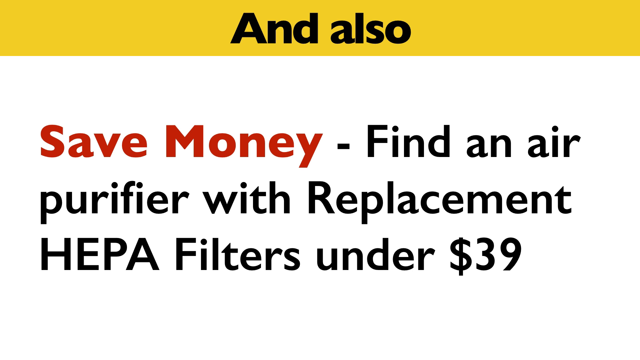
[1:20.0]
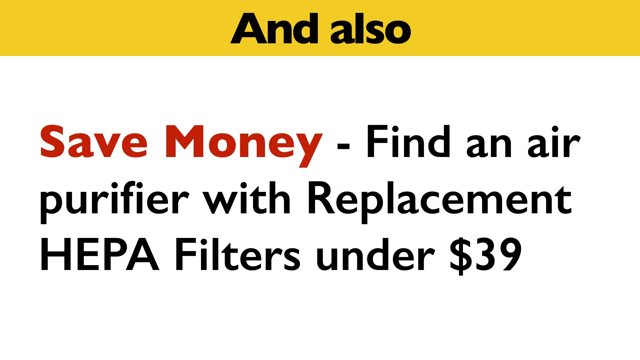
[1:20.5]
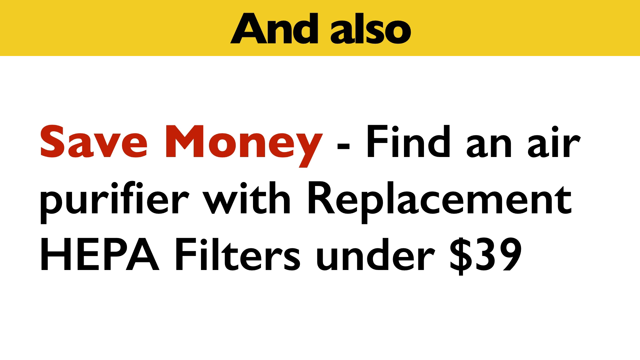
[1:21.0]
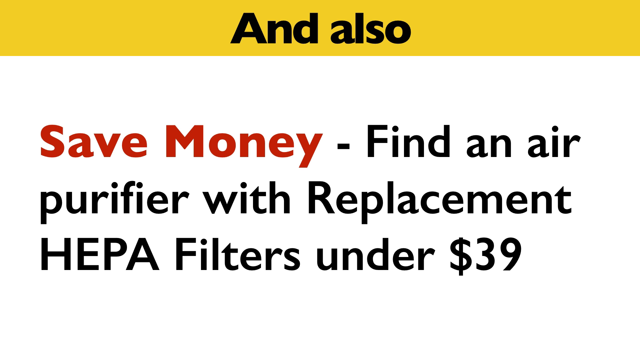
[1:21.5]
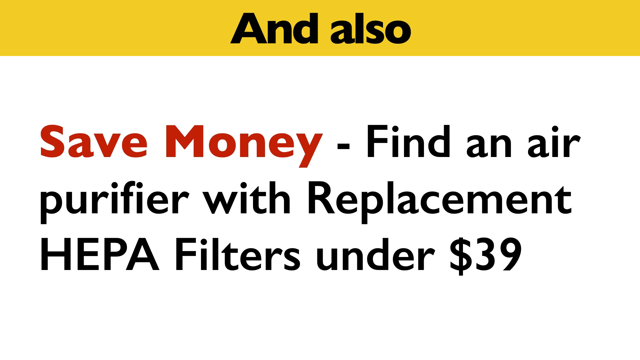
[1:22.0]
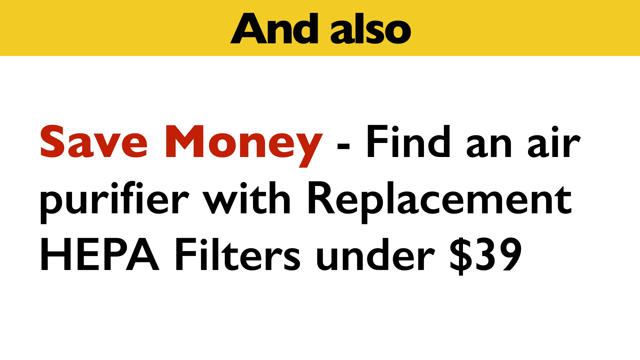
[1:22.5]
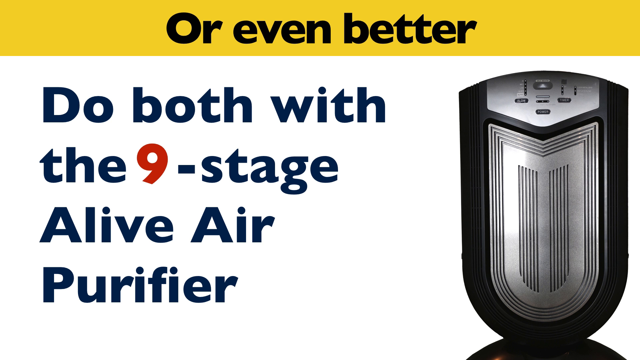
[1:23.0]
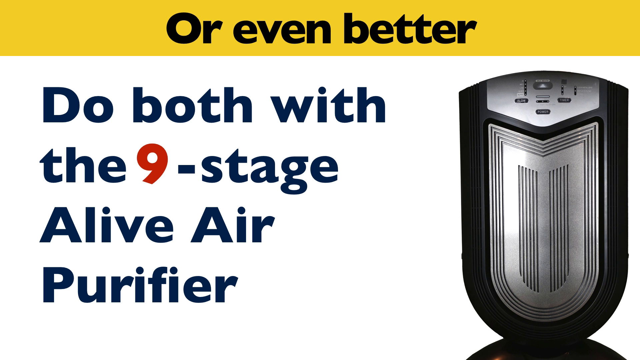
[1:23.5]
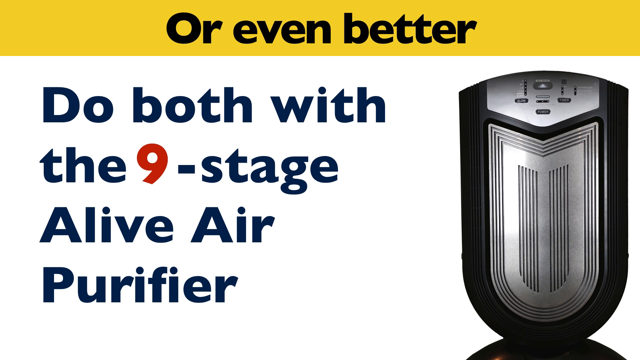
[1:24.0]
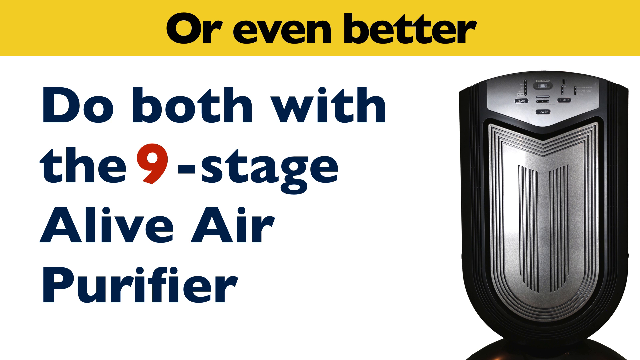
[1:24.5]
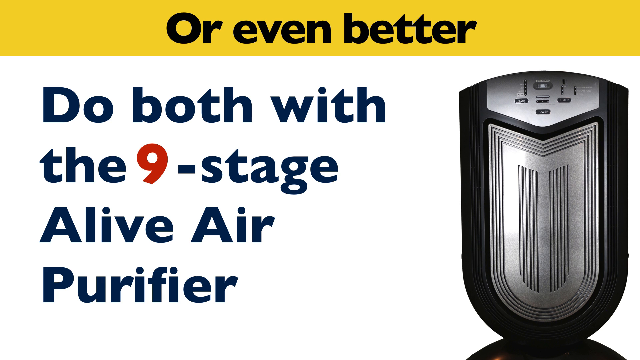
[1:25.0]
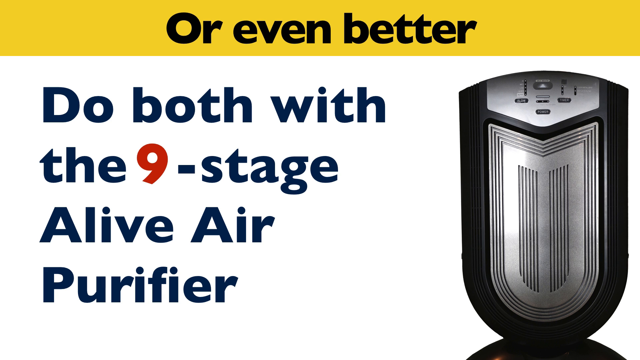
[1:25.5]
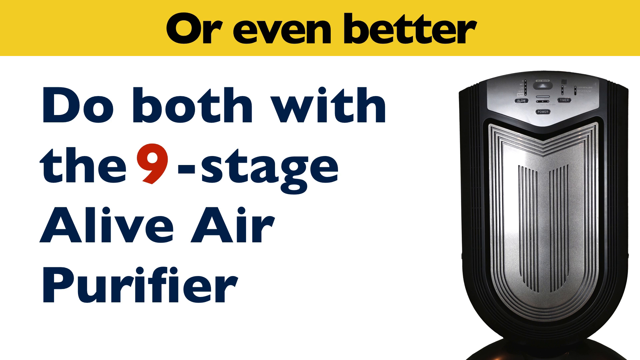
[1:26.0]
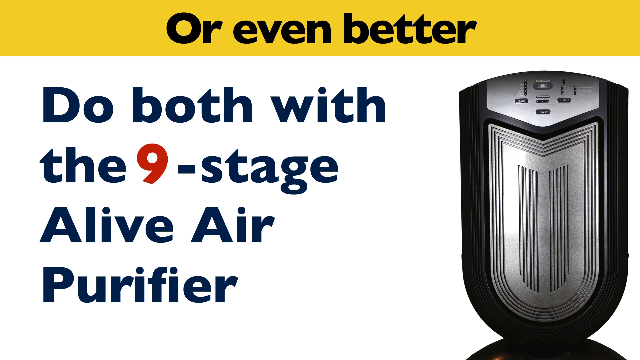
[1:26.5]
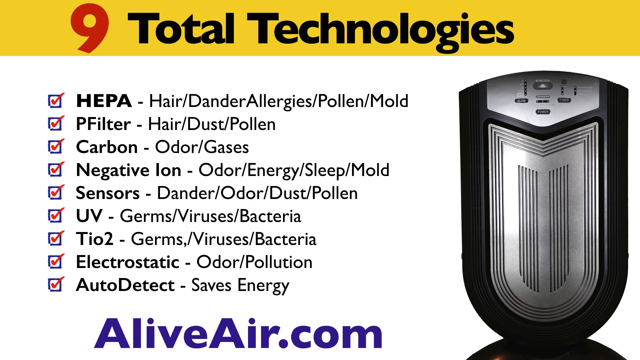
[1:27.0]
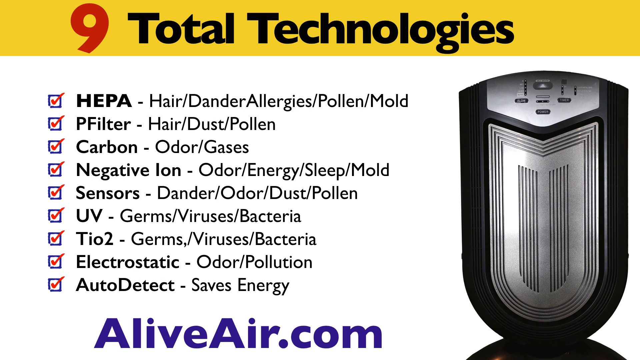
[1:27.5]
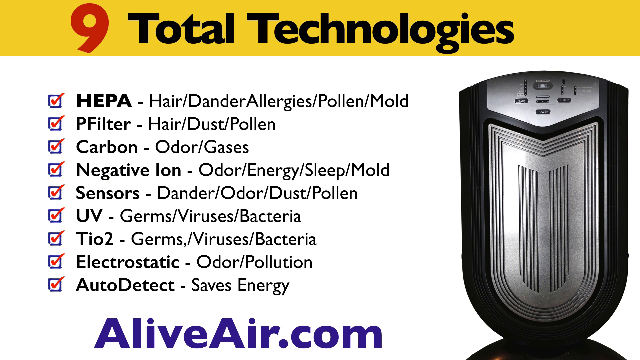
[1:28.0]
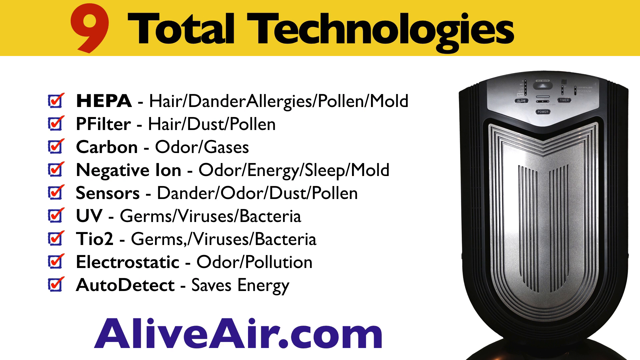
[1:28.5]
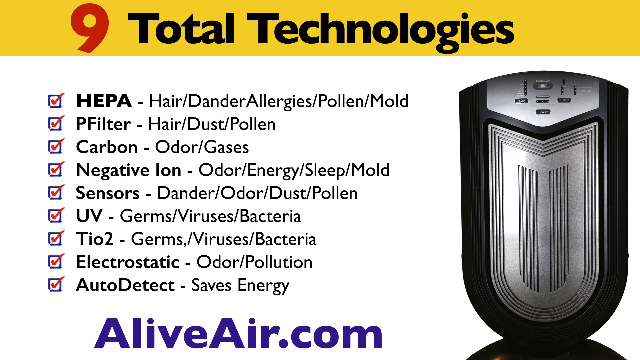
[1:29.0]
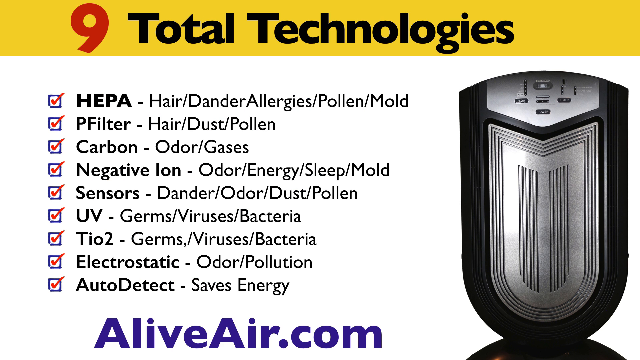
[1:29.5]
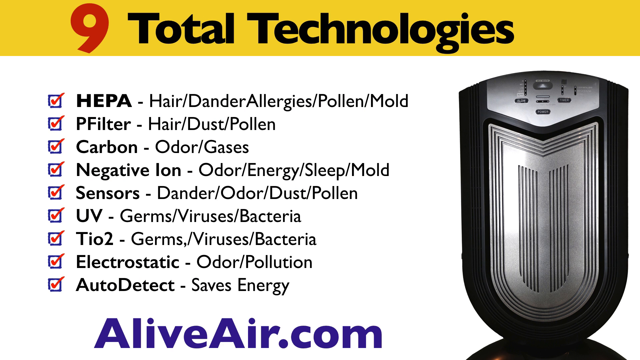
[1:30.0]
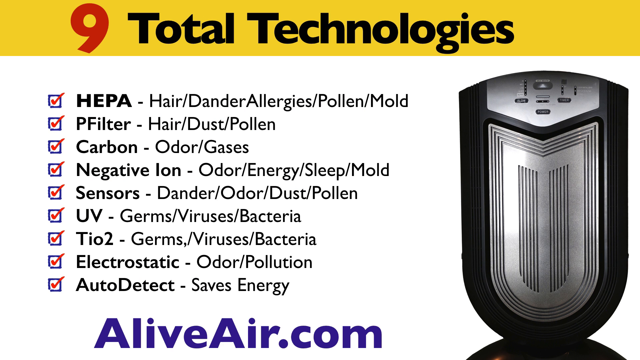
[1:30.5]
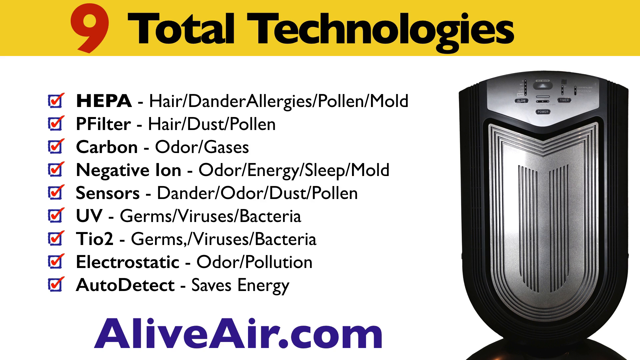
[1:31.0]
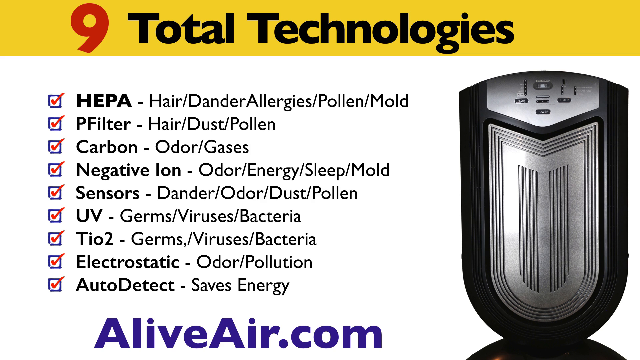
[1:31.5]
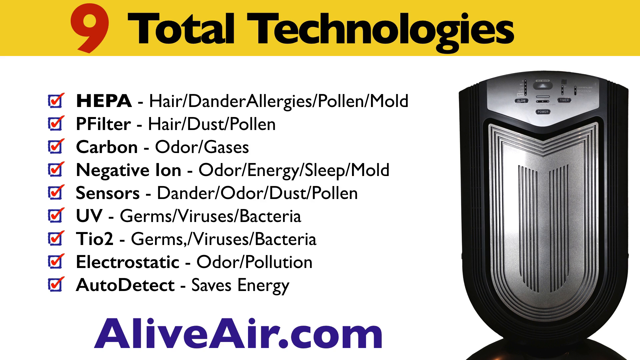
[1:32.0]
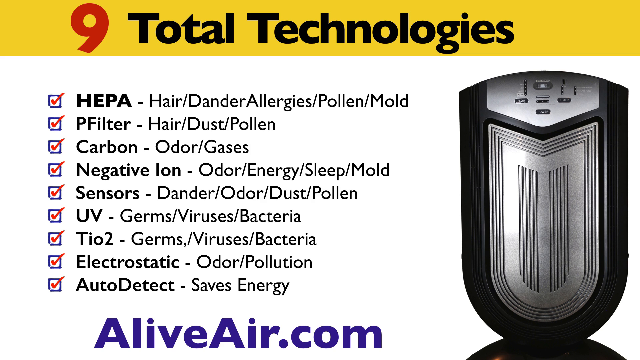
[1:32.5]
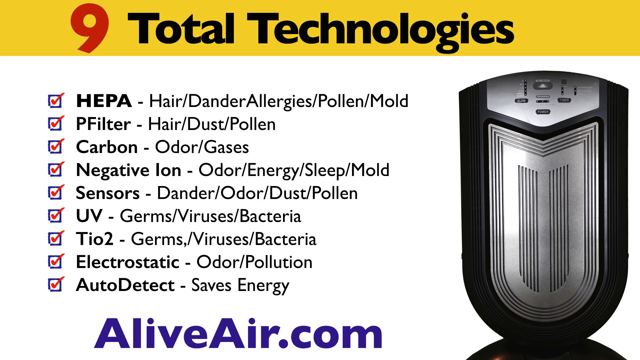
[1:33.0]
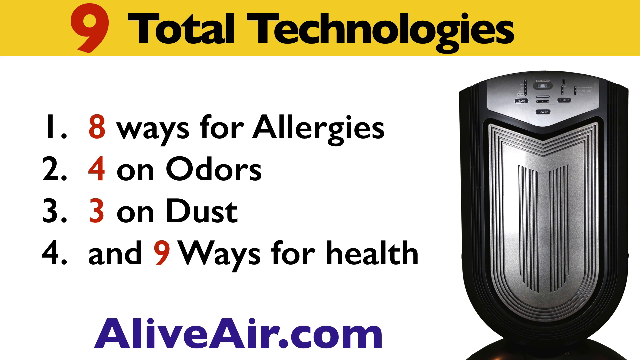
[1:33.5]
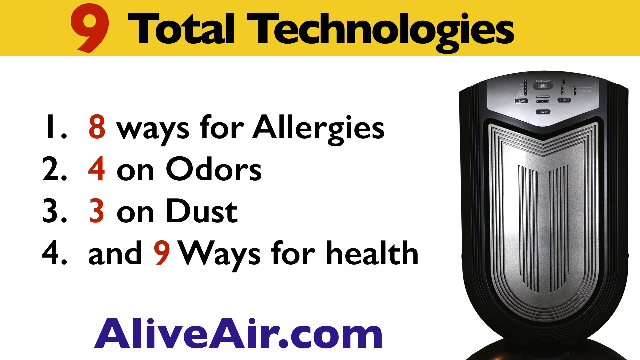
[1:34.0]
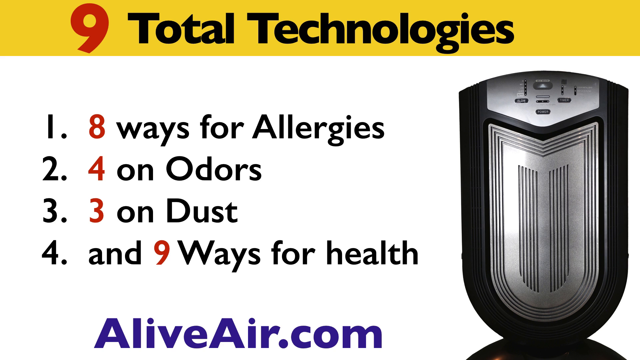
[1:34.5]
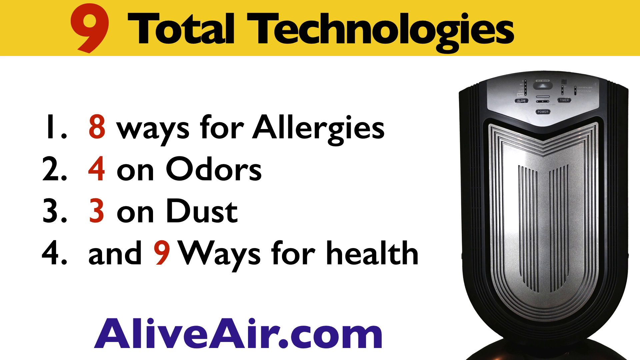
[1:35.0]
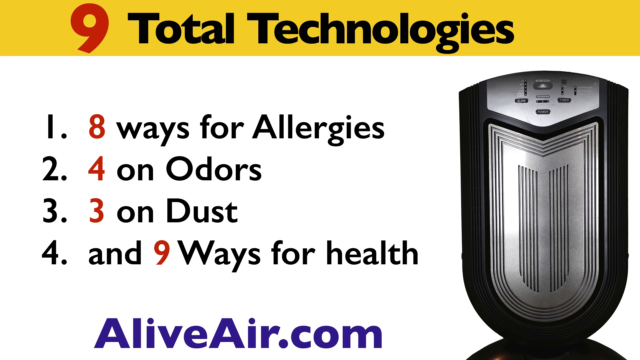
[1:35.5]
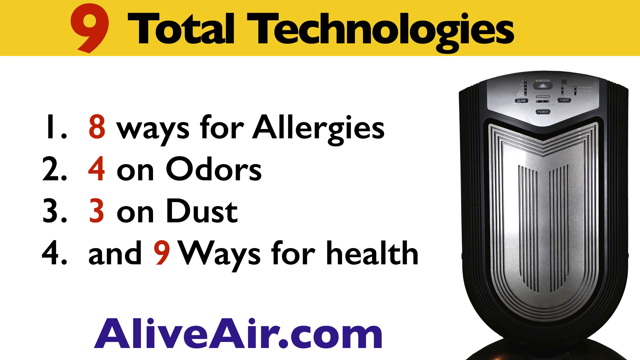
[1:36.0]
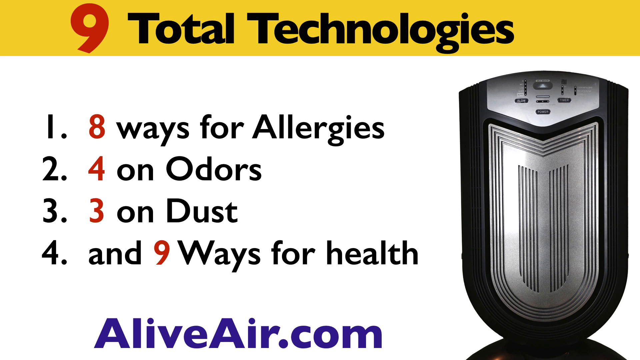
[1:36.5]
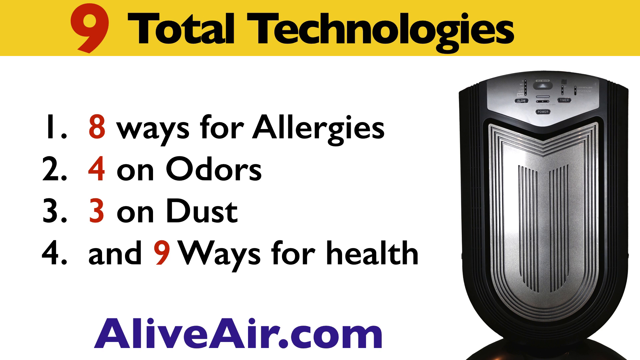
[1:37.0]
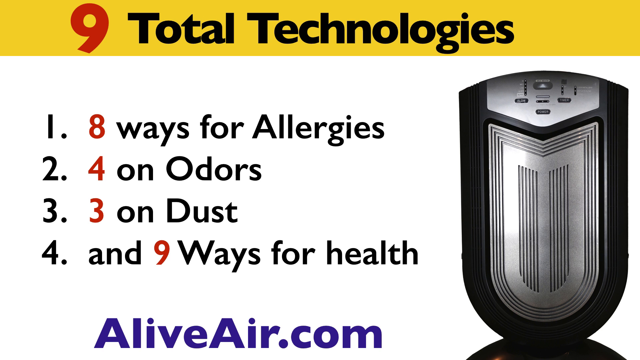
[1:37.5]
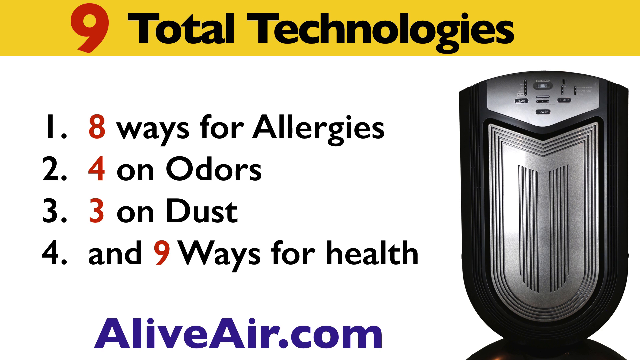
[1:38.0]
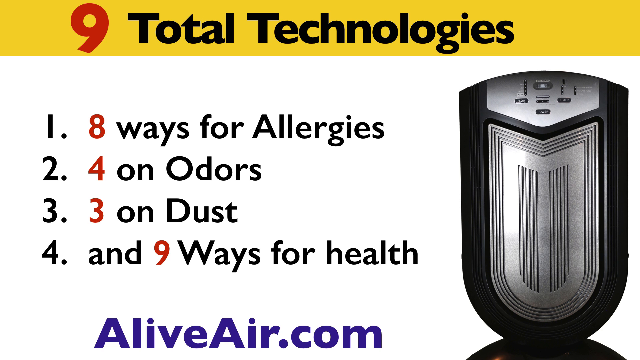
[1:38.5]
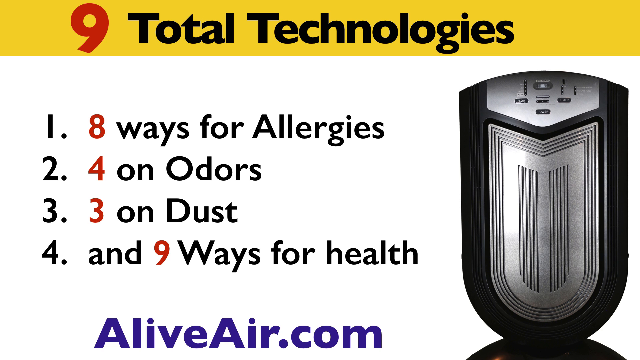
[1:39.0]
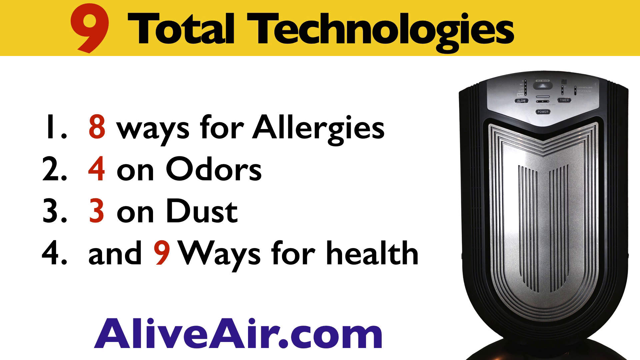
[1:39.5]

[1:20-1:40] The slide has the yellow taking up about 5% of the top with the title in bold black text, and underneath, on a white background and left justified, "save money" in red bold text, then in standard text "- Find an air purifier with Replacement HEPA Filters under $39", with the 39 written in numbers and a dollar sign. Another slide of similar appearance has "or even better" in the title and then, all in bold, "do both with the nine stage Alive Air Purifier", with the number nine in red and the last three words in title case. To the right is a photograph of a black and silver air purifier with buttons on top. A similar slide follows with "nine total technologies" in the yellow, "nine" in red and "total technologies" in bold. Below is a bulleted list whose bullets look like check boxes with bright red ticks: "HEPA - hair/dander/allergies/pollen/mold", "P-filter - hair/dust/pollen", "carbon - odour/gases", "negative ion - odour/energy/sleep/mold", "sensors - dander/odour/dust/pollen", "UV - germs/viruses/bacteria", "PIO2 - germs/viruses/bacteria", "electrostatic - odour/pollution" and "auto detect saves energy". The first word of each bullet point is in bold, followed by a dash. At the bottom middle of the bullet-point section, "AliveAir.com" is written in bold blue text with both A's capitalised. Then a numbered list appears: "1 8 ways for allergies", "2 4 on odours", "3 3 on dust", "4 9 ways for health", with the numbers eight, four, three and nine in red.